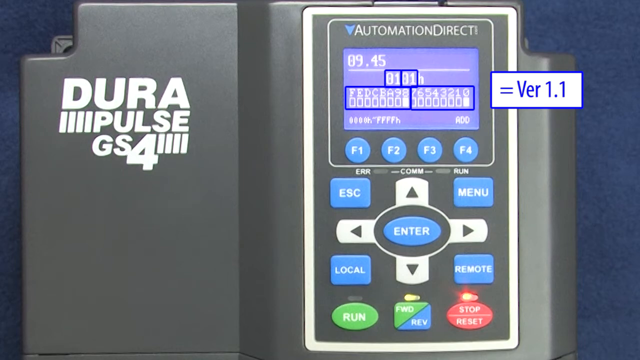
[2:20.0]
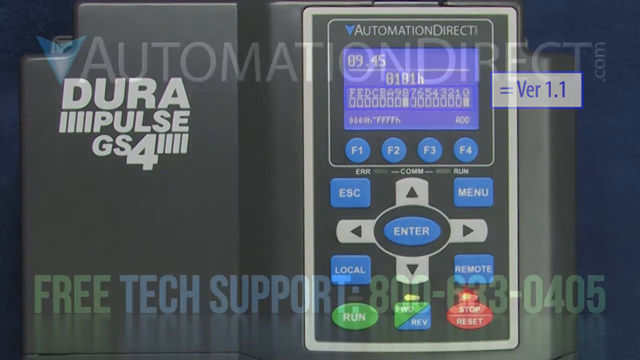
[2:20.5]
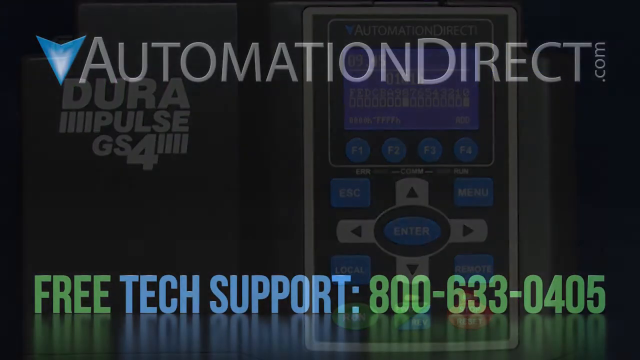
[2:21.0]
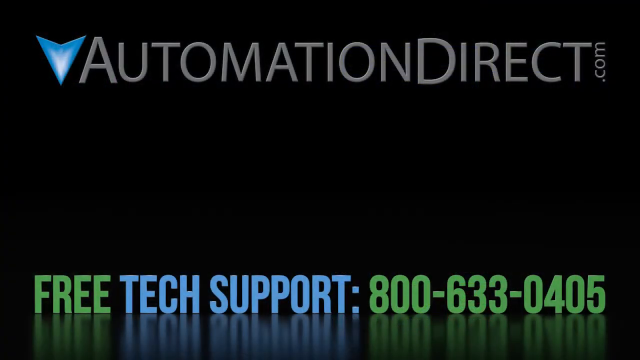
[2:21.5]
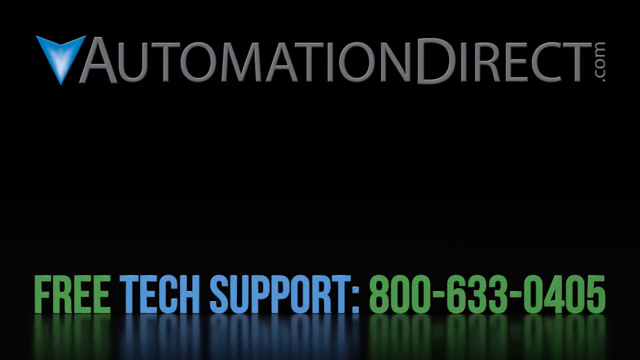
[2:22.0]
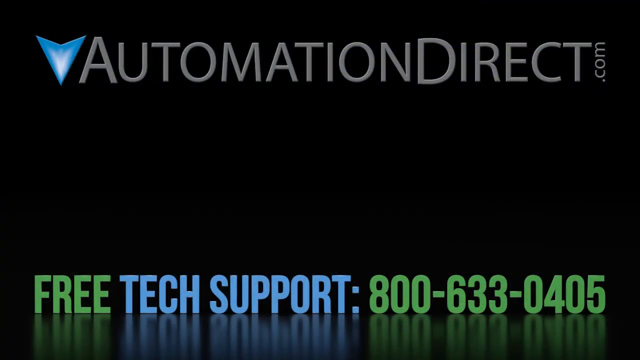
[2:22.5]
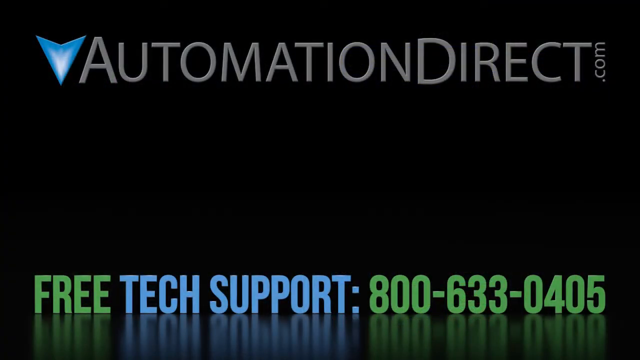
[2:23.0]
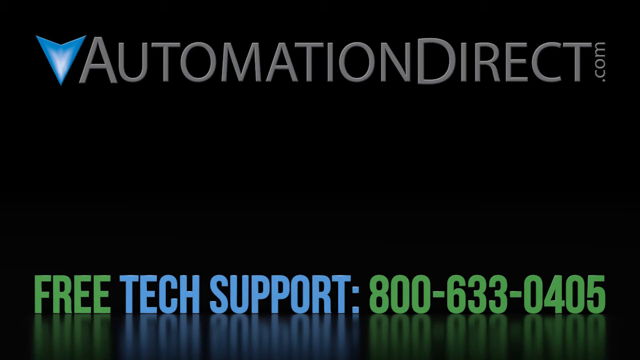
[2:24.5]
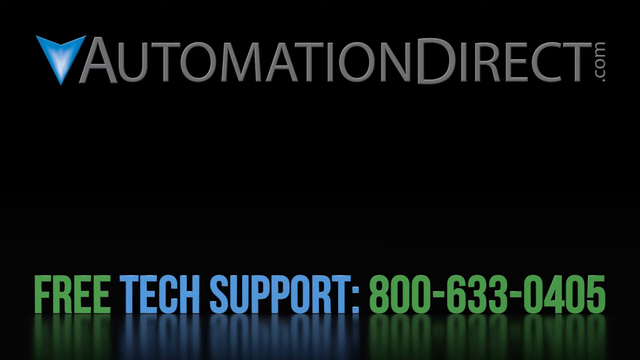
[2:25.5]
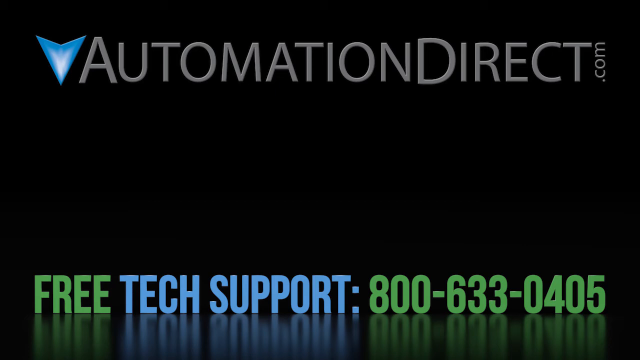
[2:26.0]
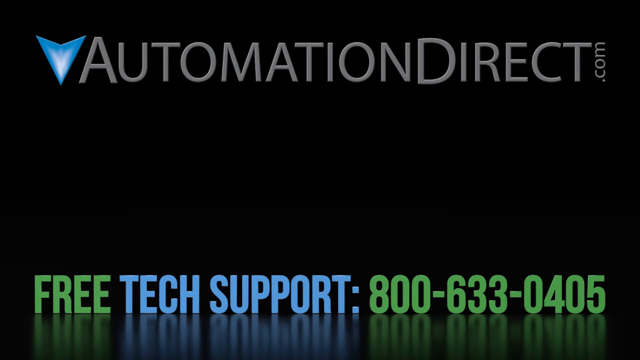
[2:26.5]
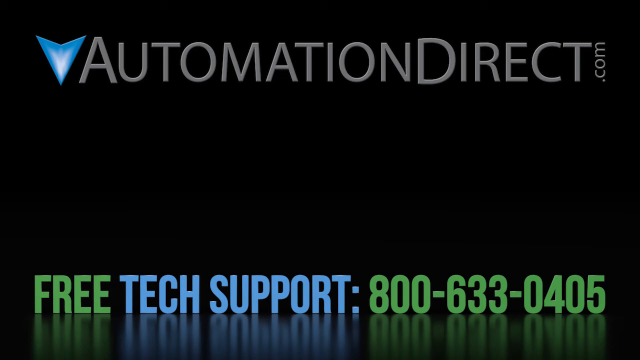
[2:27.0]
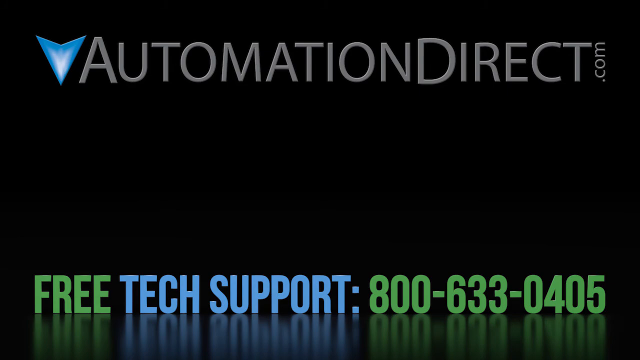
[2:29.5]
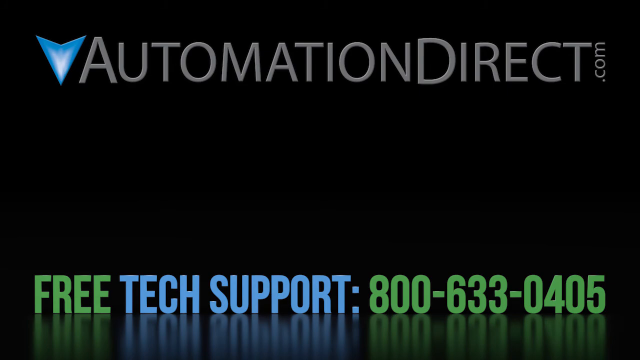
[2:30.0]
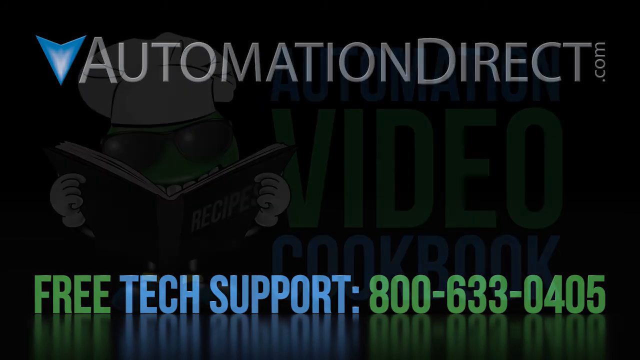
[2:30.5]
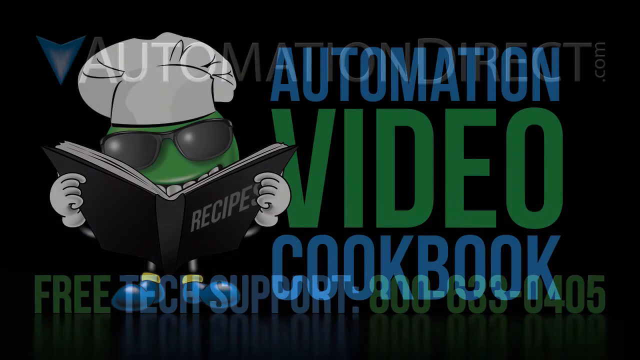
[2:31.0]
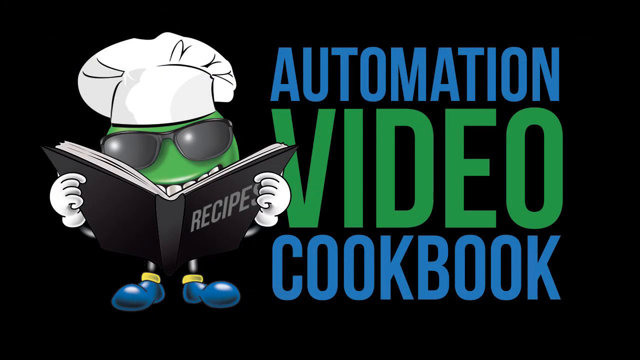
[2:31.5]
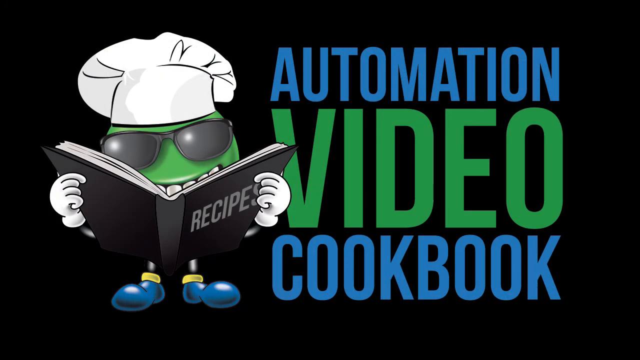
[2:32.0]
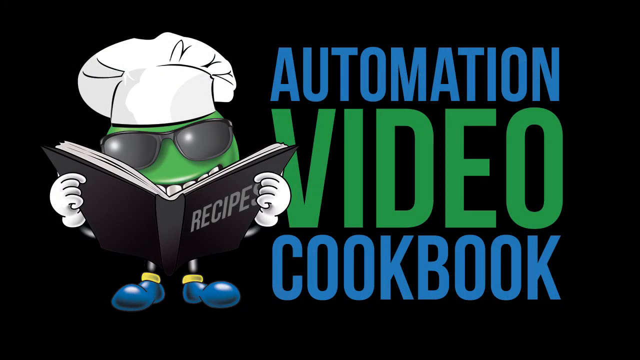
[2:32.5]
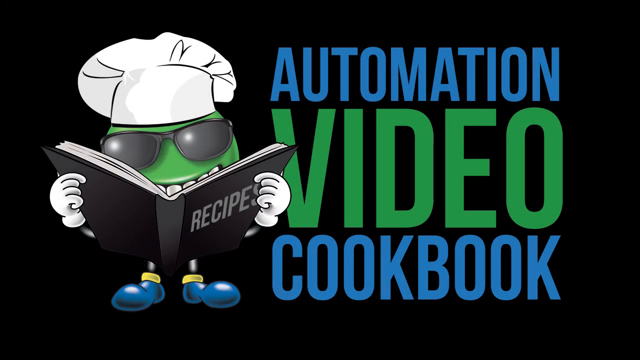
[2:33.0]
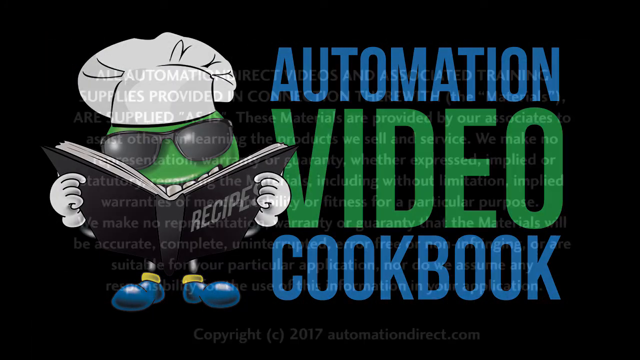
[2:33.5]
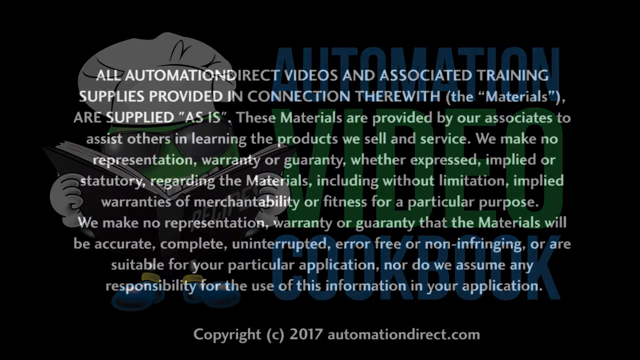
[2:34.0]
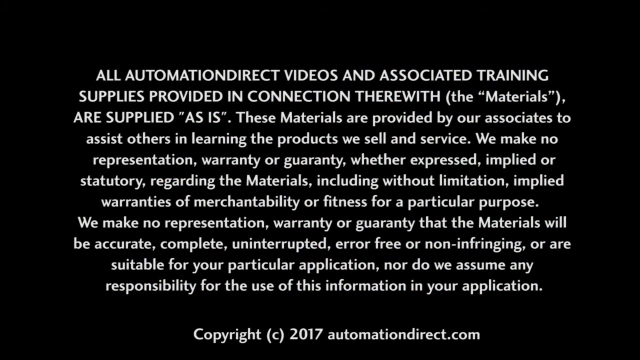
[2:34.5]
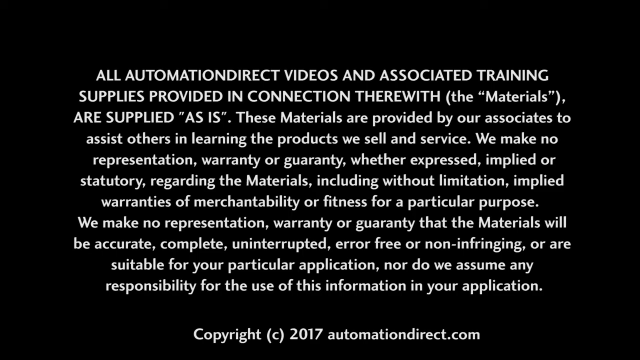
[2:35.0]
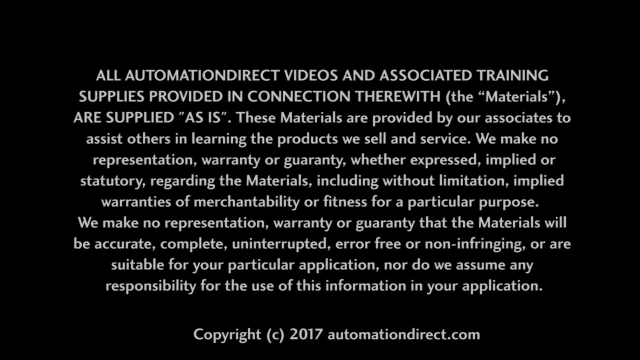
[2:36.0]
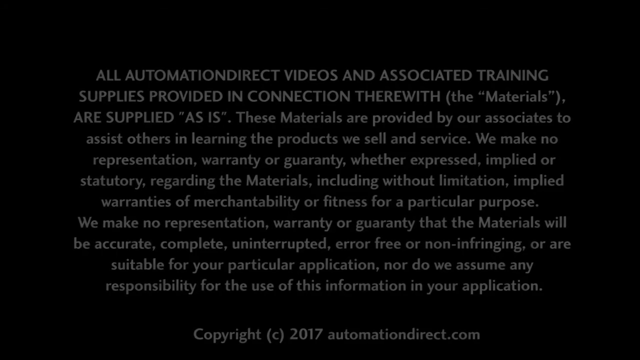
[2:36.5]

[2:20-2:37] AutomationDirect is shown with free tech support and the phone number 800-633-0405. Text mentions an "automation video cookbook," and a short disclaimer beginning "all videos and associated training" appears along with the company name. A little wire is visible on the back, or possibly the front, of the device with its top panel taken off. The DuraPulse GS4 is black and has a display, and it is from automationdirect.com, which offers free tech support.